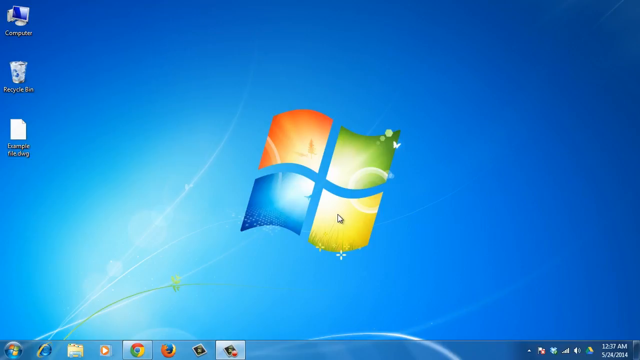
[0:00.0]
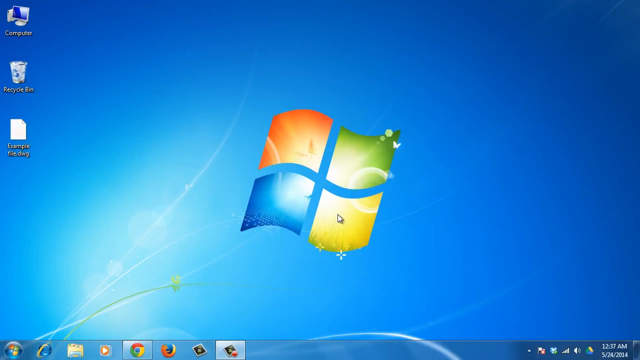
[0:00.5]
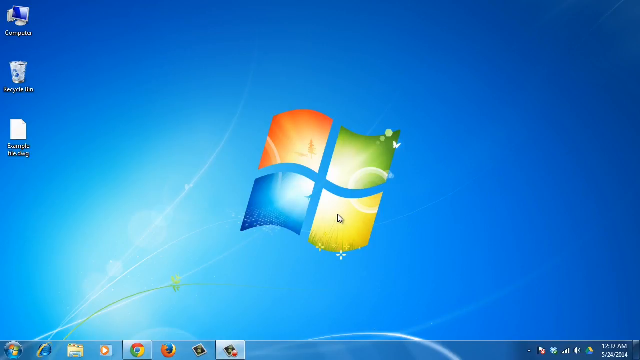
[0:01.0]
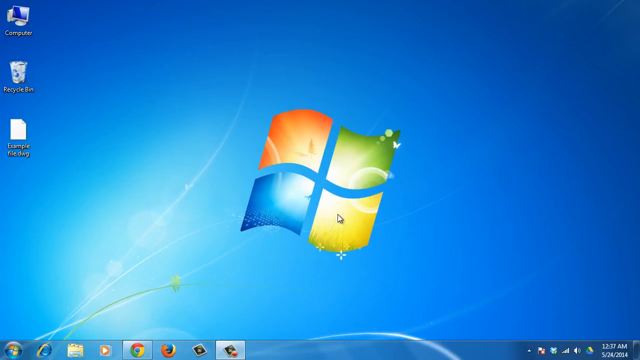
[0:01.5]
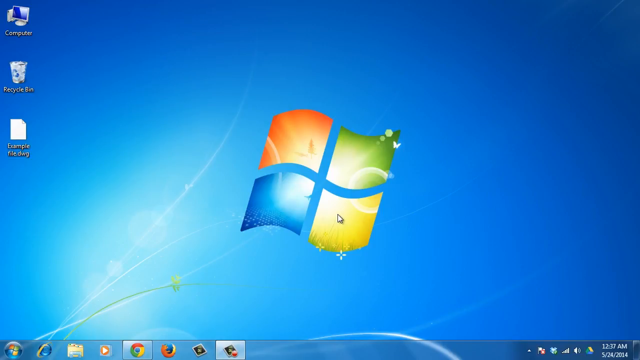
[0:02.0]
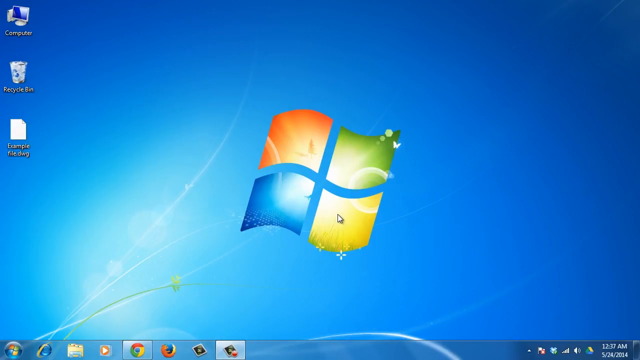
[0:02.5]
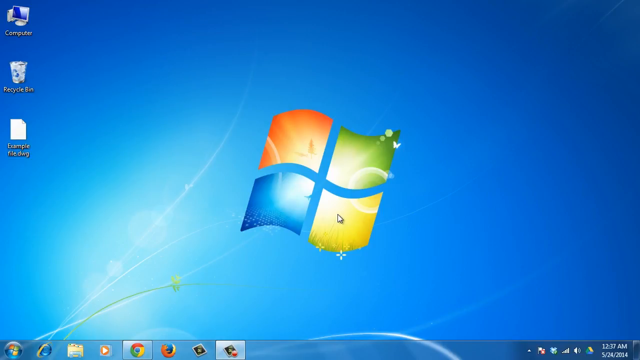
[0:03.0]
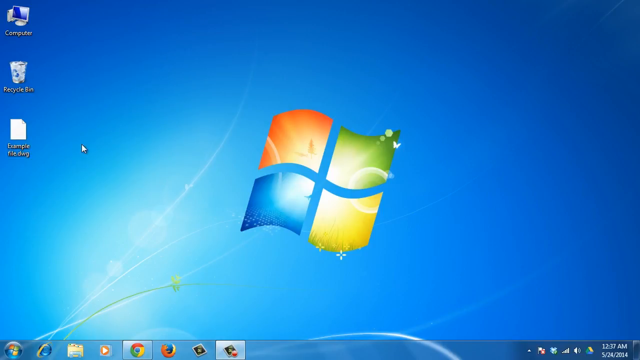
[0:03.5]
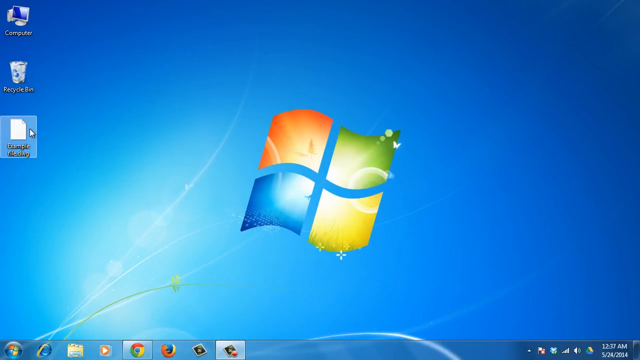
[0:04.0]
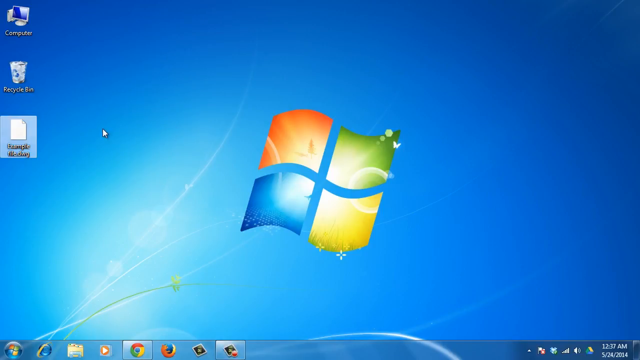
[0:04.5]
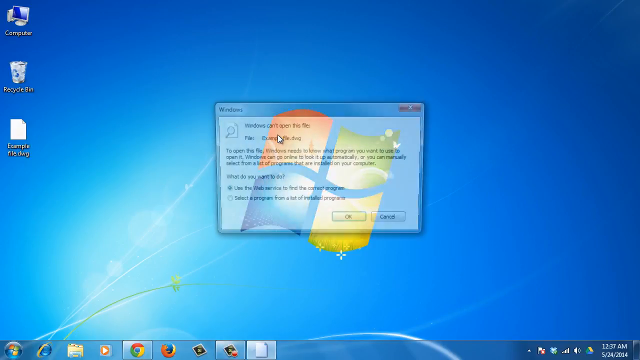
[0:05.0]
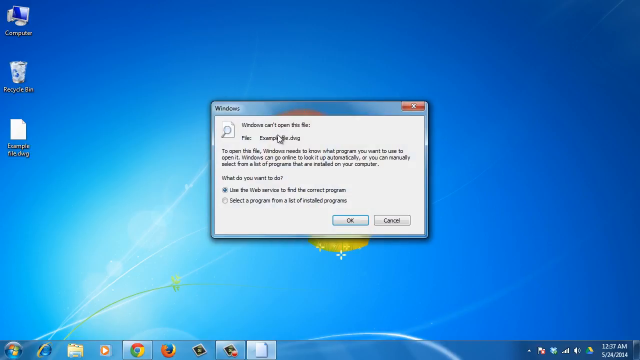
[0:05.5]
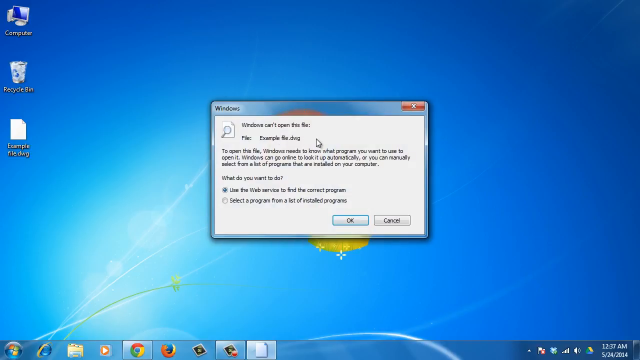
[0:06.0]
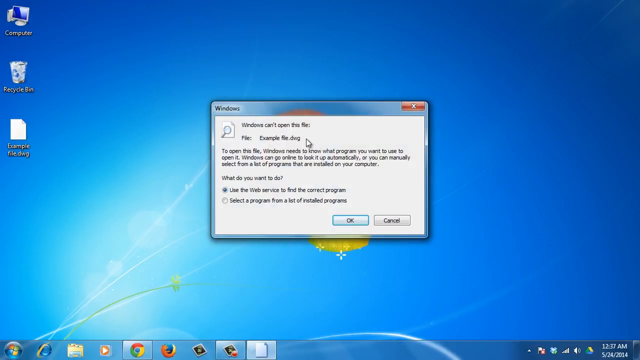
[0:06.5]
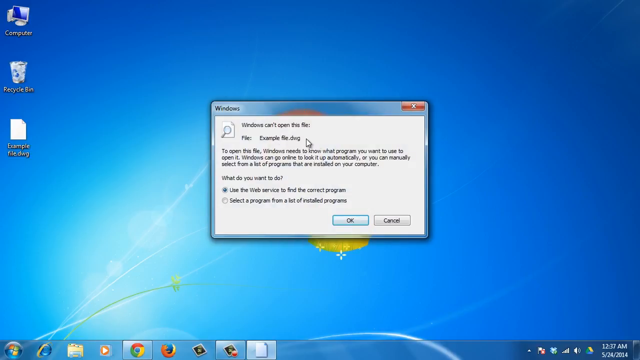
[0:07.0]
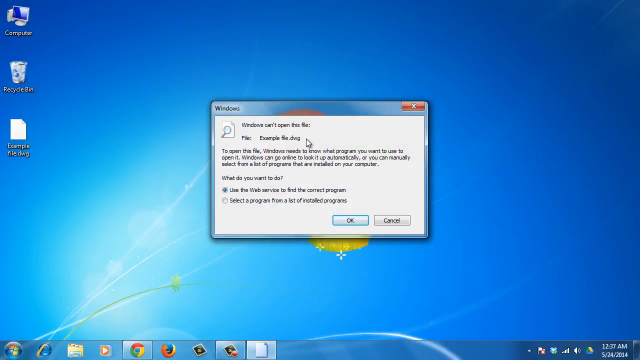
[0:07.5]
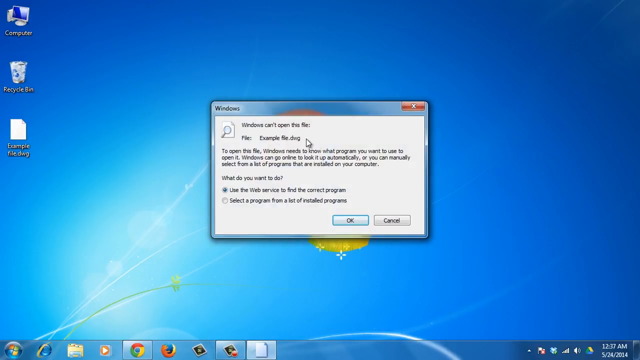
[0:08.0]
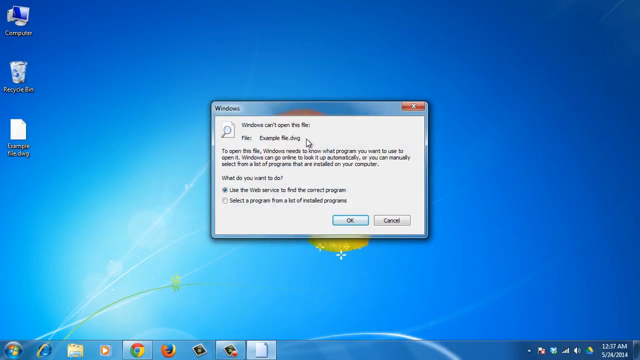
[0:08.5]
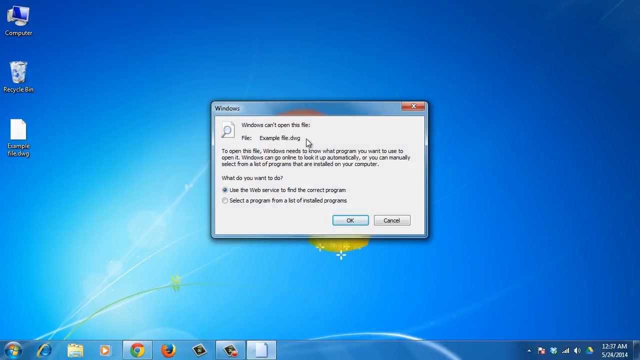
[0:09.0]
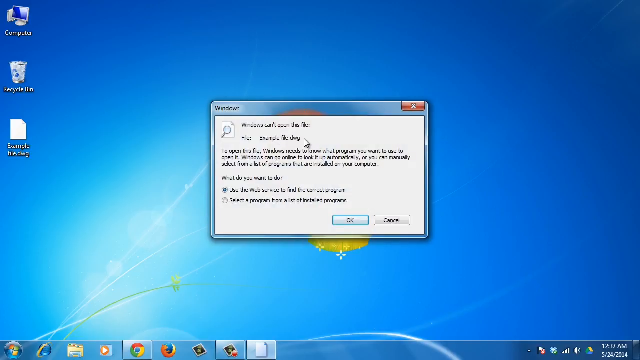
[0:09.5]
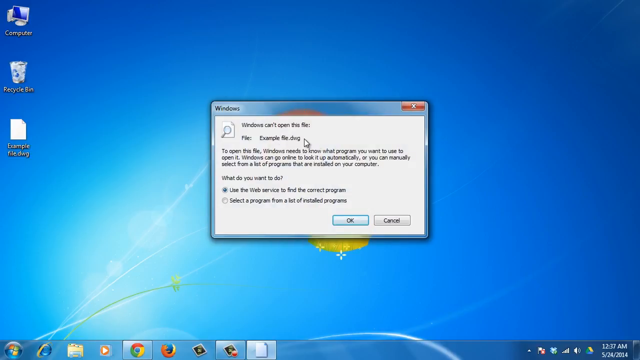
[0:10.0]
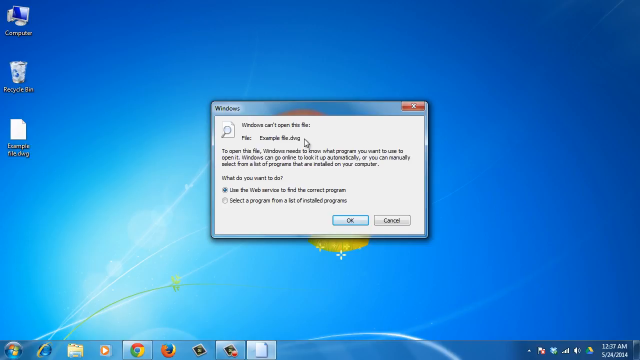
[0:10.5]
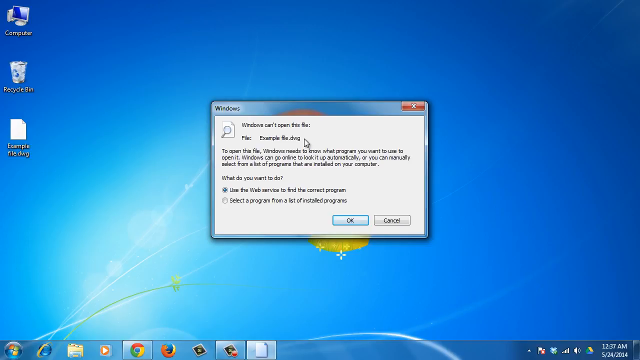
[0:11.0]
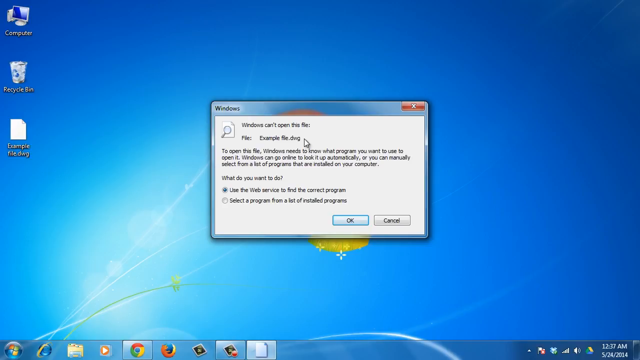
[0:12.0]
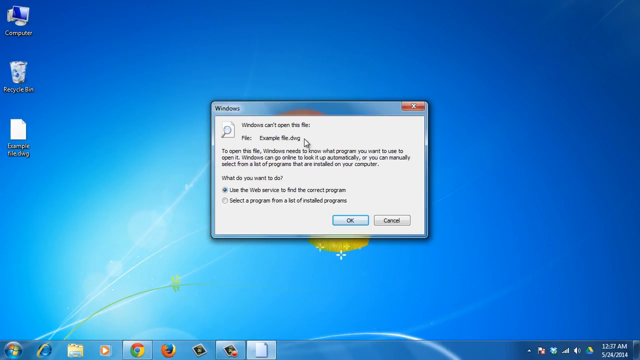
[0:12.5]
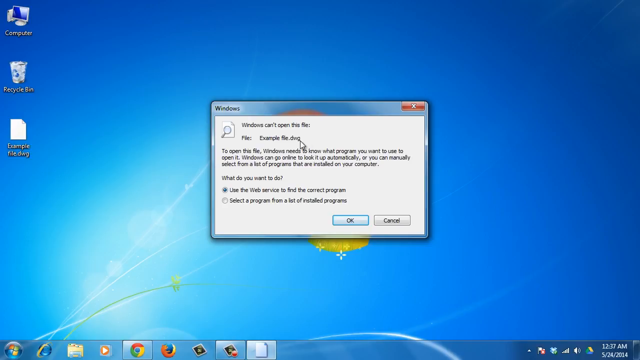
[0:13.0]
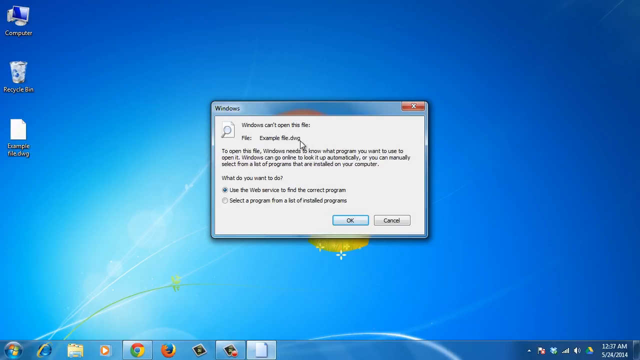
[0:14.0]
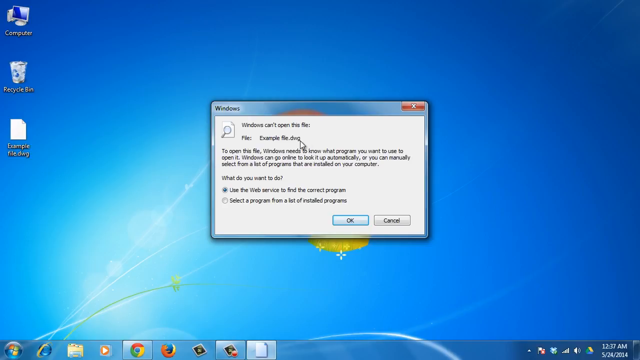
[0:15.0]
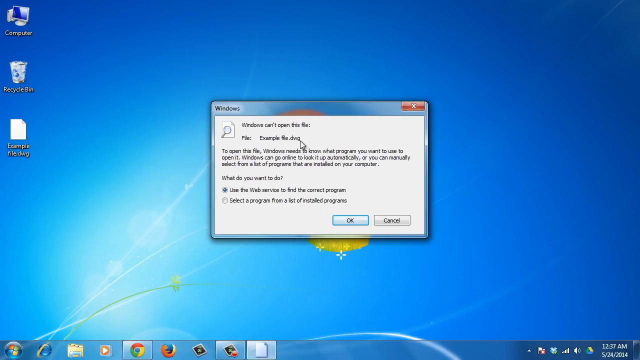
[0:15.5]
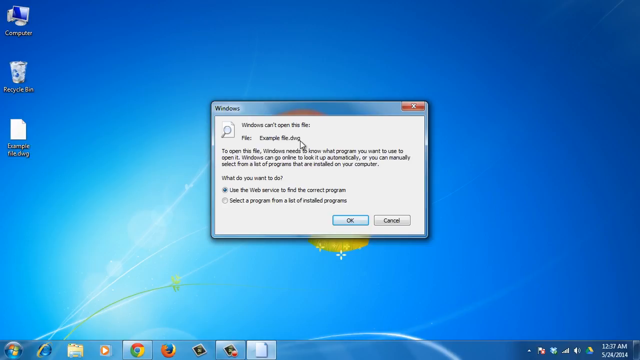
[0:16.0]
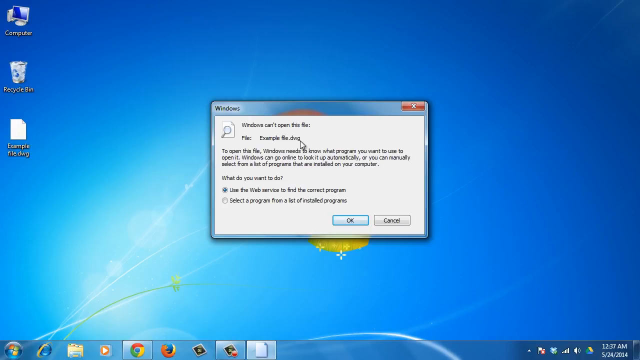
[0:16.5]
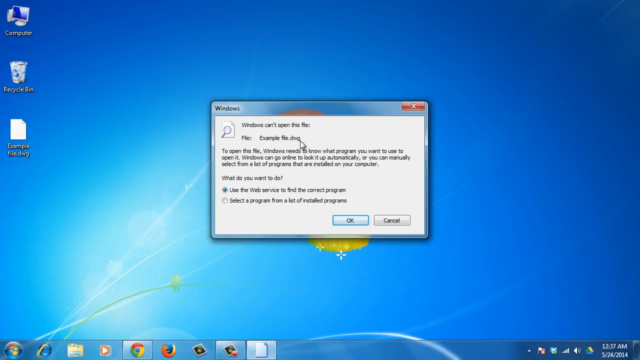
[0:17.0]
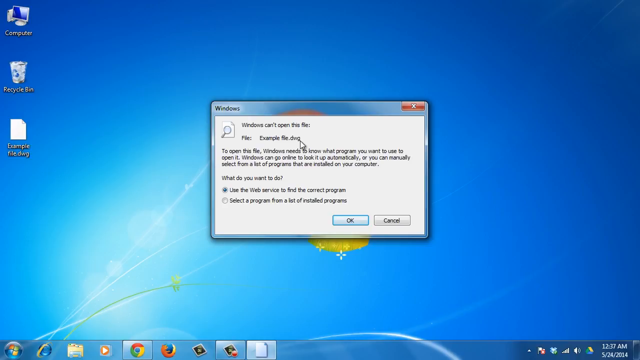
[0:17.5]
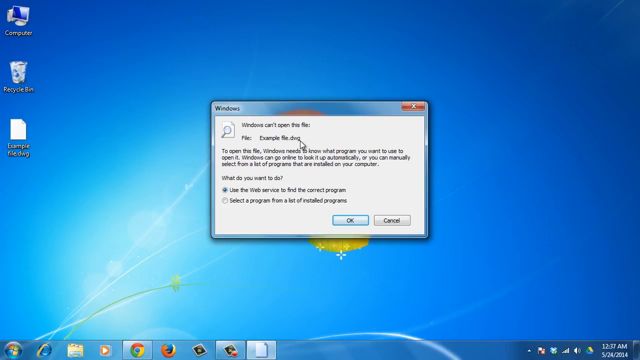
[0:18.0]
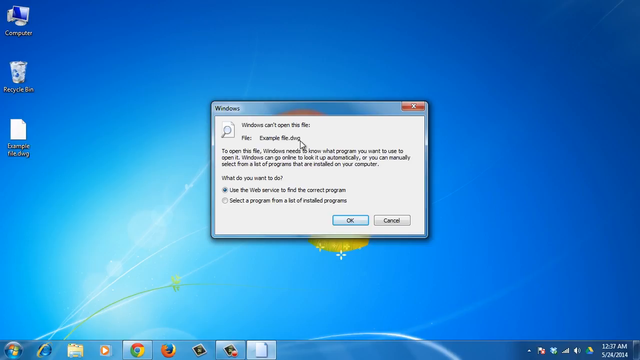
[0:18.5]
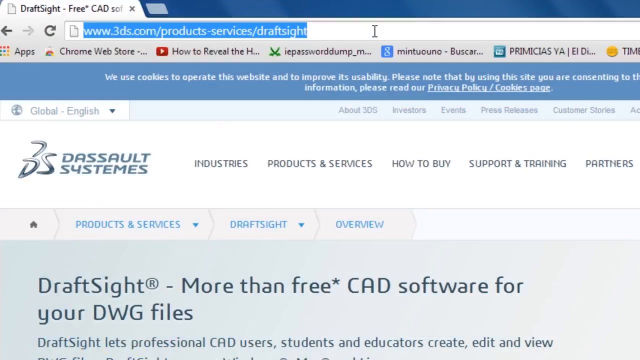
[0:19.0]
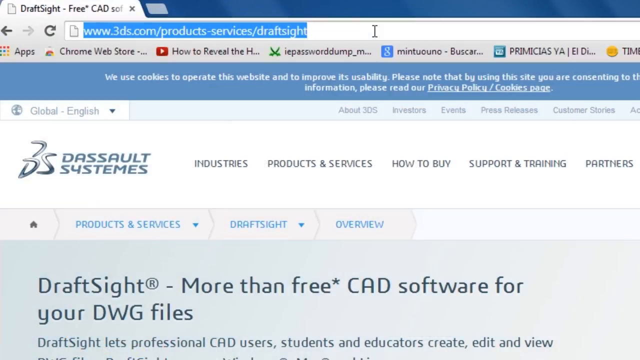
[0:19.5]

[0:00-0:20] The video opens on the classic desktop of Windows 7 or Windows Vista. Chrome is open but minimized to the taskbar. There are only three icons on the desktop: Computer, Recycle Bin, and a .dmg file. The user tries to open the .dmg file, and a notice appears saying "Windows can't open the file," with a brief description of why. It gives two options: "use the web service to find the correct program" or "select a program from a list of installed programs," with OK and Cancel buttons. The user clicks OK and is sent to a website in Google Chrome, Dassault Systèmes, which seems to be useful for opening disk image files in Windows.